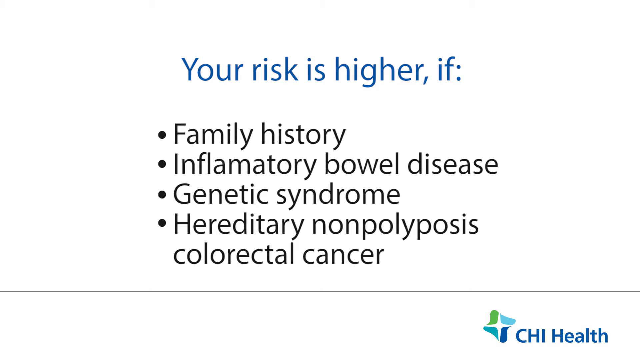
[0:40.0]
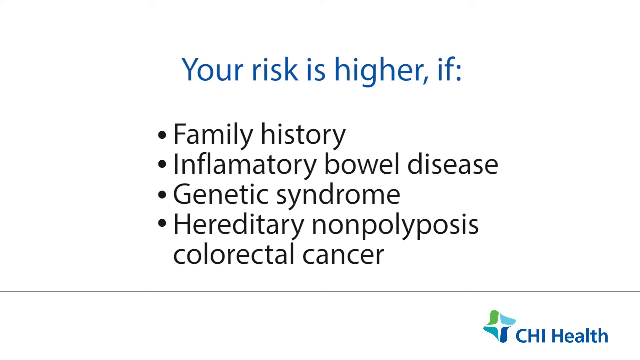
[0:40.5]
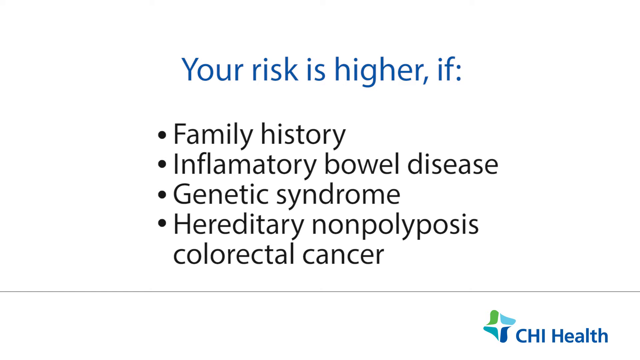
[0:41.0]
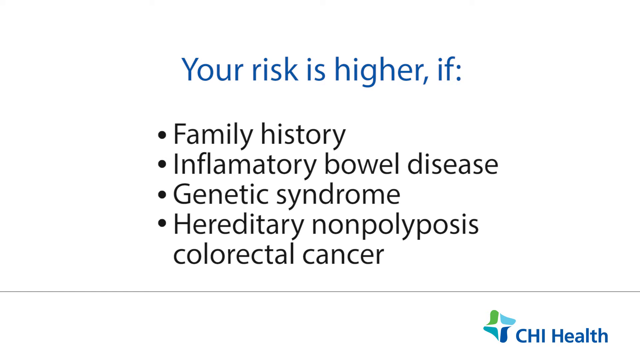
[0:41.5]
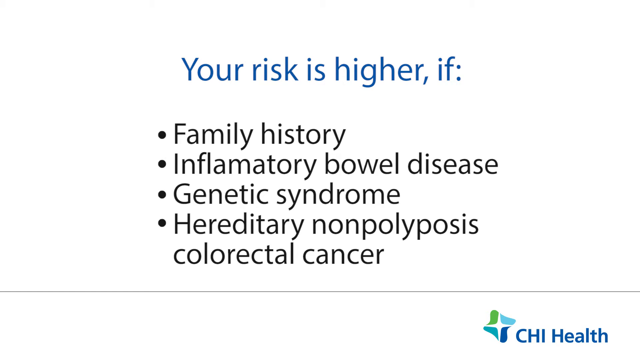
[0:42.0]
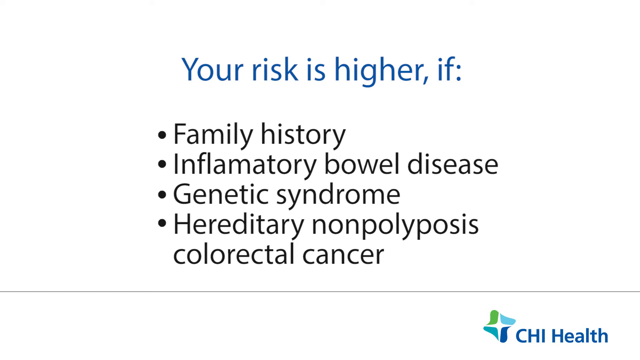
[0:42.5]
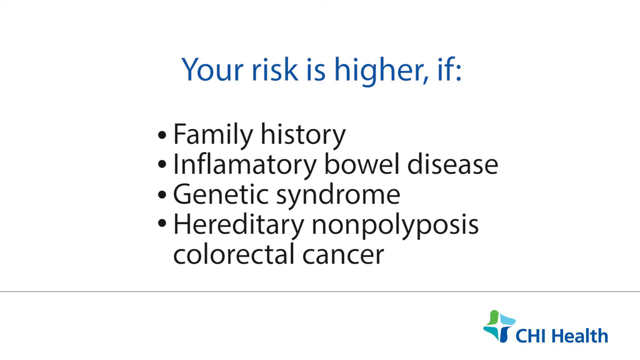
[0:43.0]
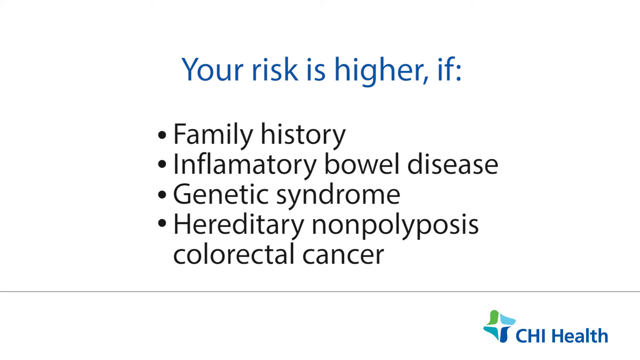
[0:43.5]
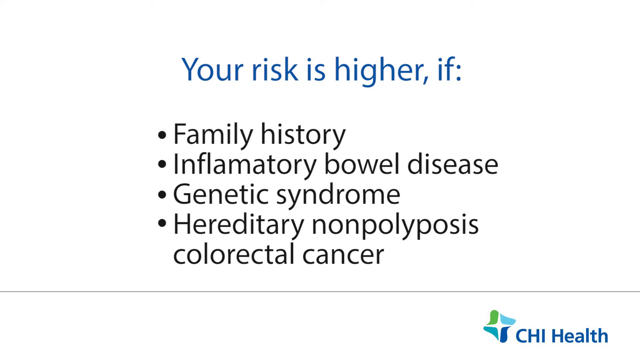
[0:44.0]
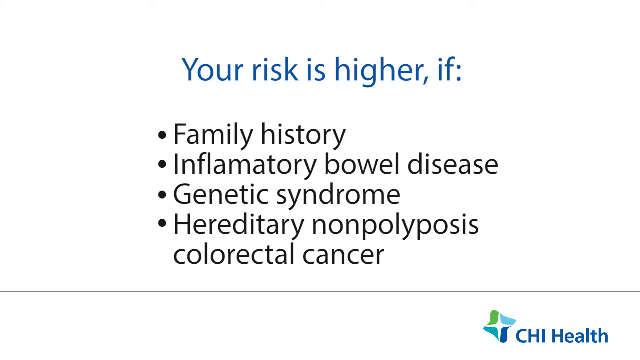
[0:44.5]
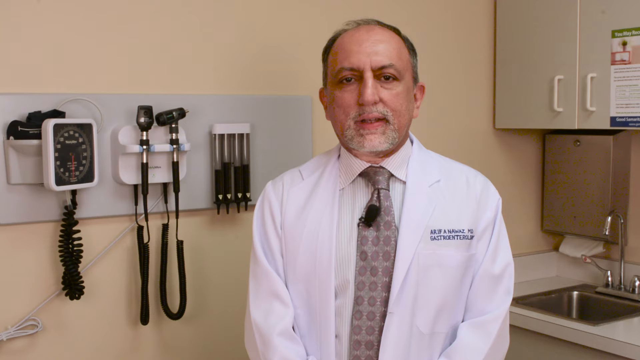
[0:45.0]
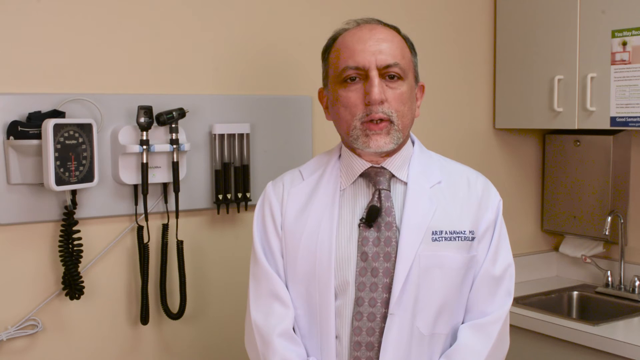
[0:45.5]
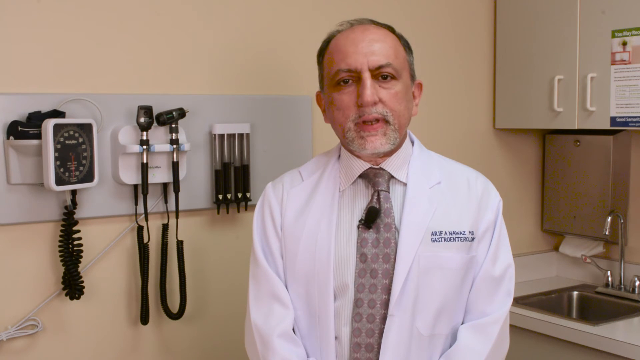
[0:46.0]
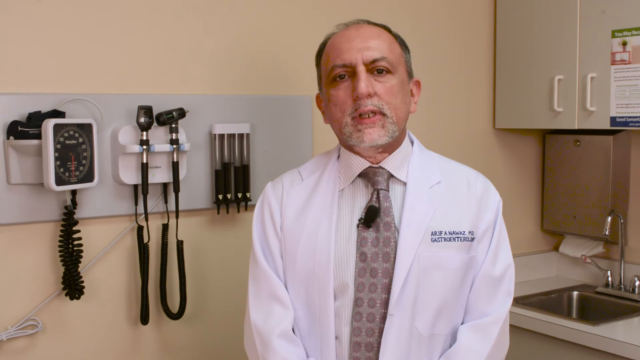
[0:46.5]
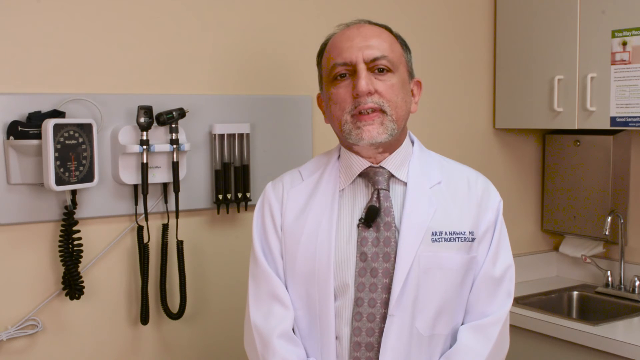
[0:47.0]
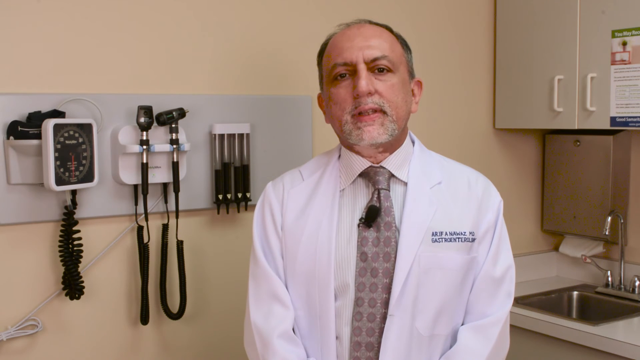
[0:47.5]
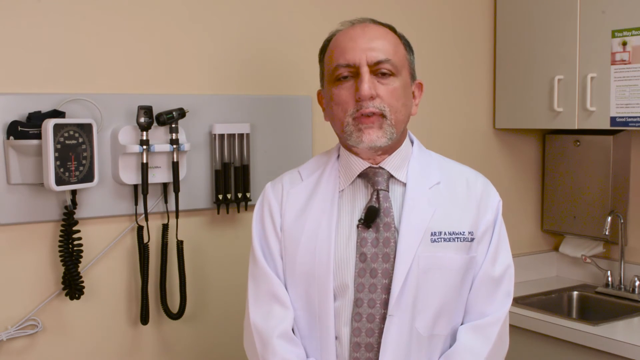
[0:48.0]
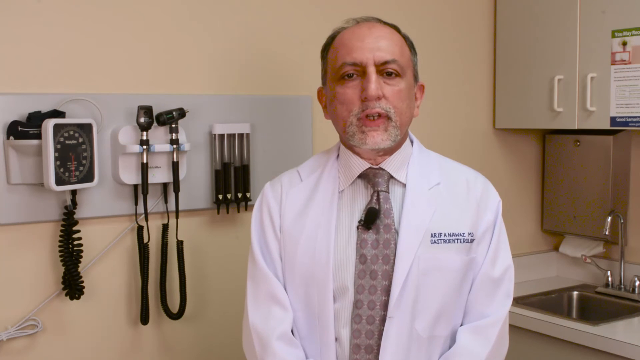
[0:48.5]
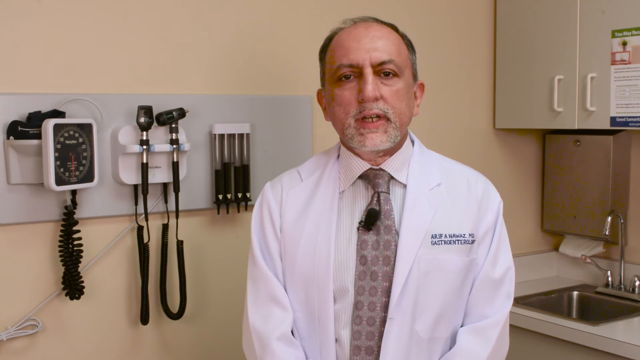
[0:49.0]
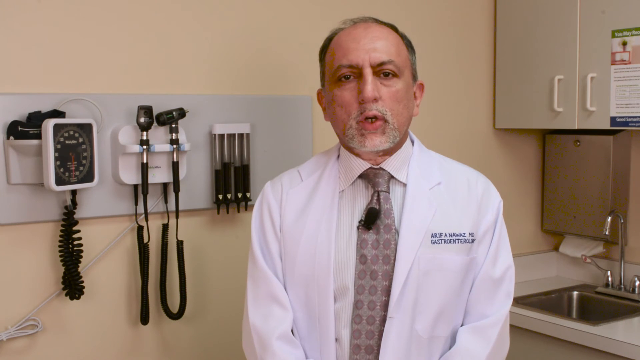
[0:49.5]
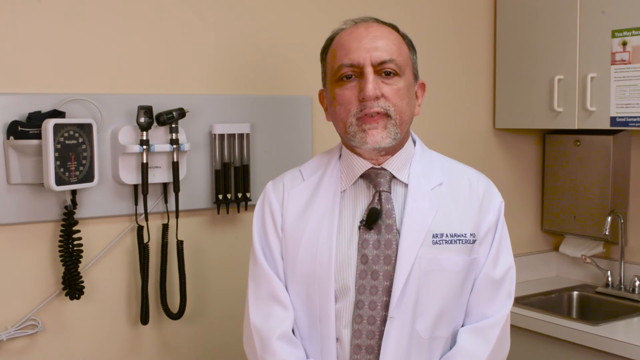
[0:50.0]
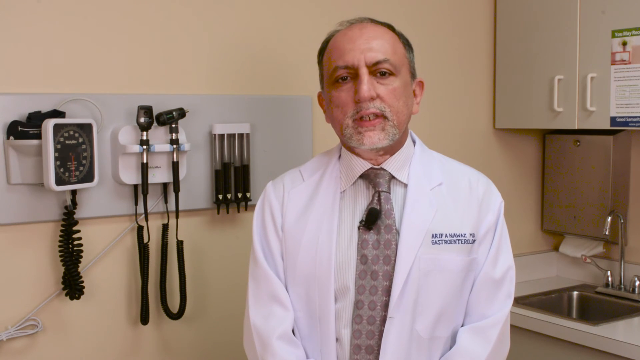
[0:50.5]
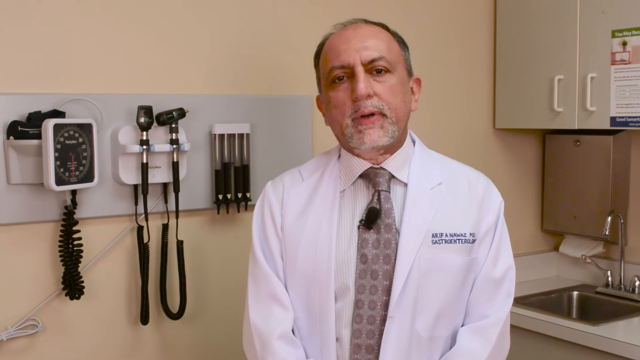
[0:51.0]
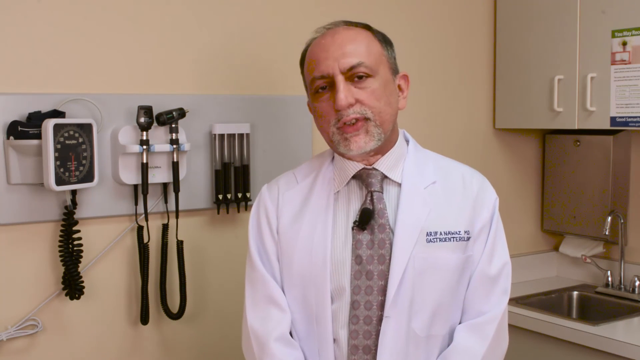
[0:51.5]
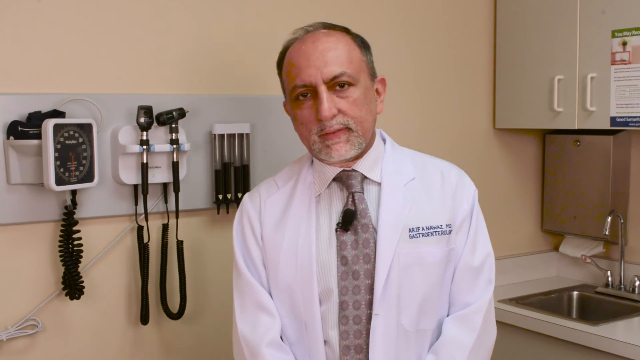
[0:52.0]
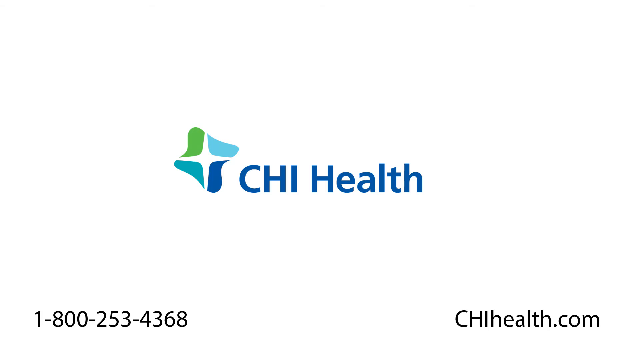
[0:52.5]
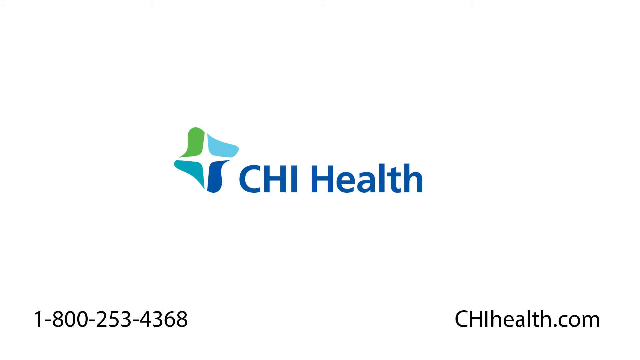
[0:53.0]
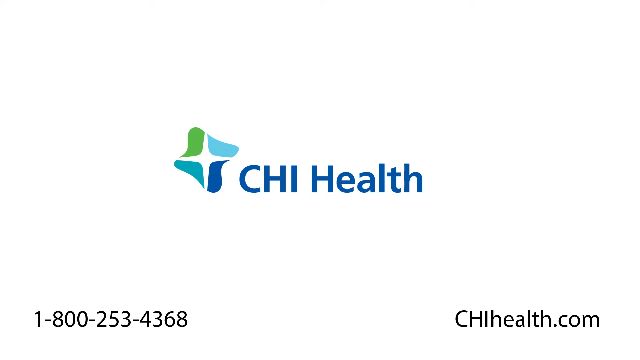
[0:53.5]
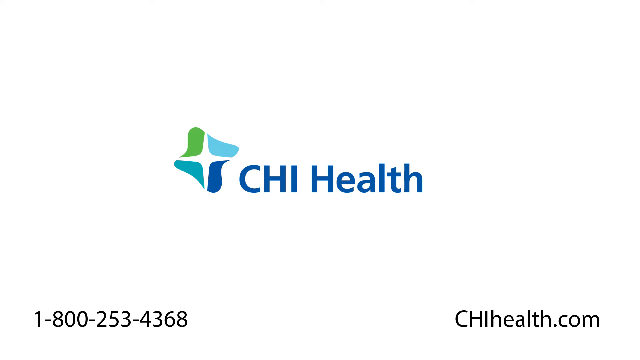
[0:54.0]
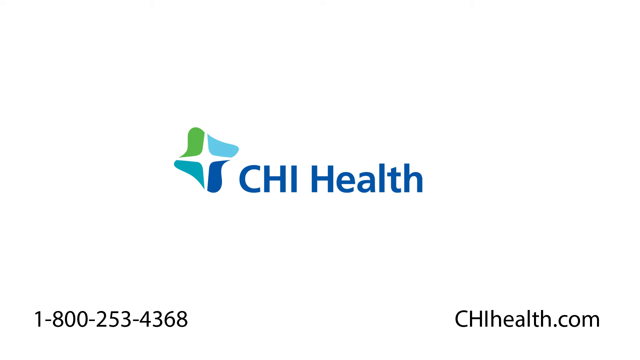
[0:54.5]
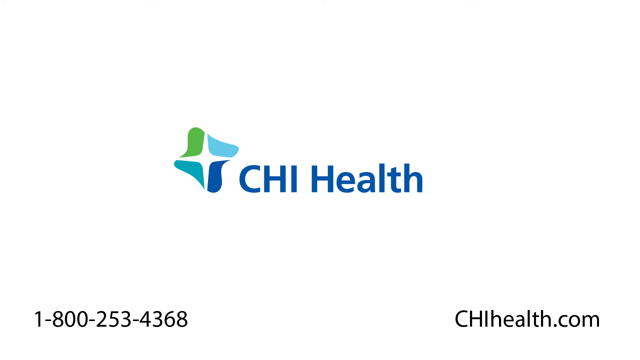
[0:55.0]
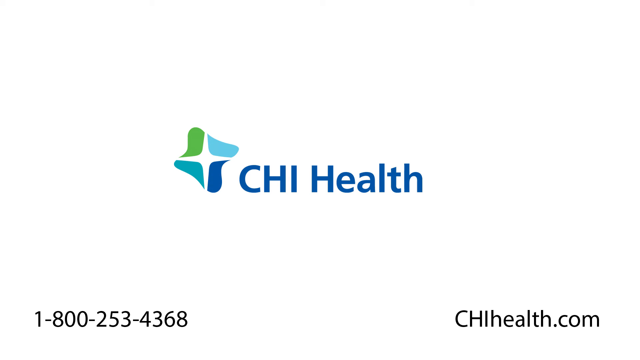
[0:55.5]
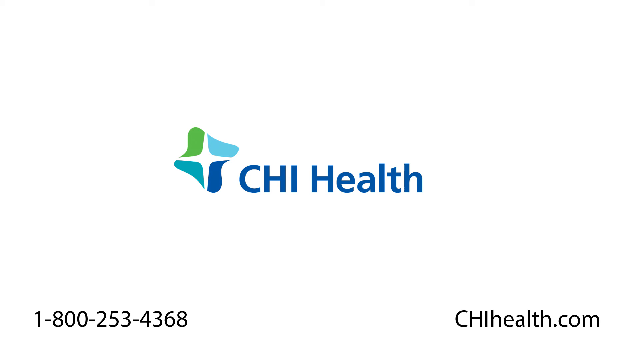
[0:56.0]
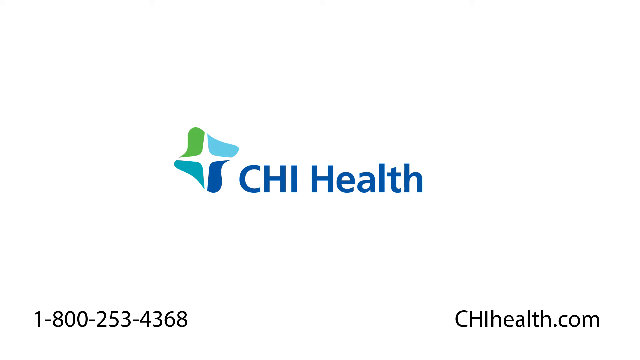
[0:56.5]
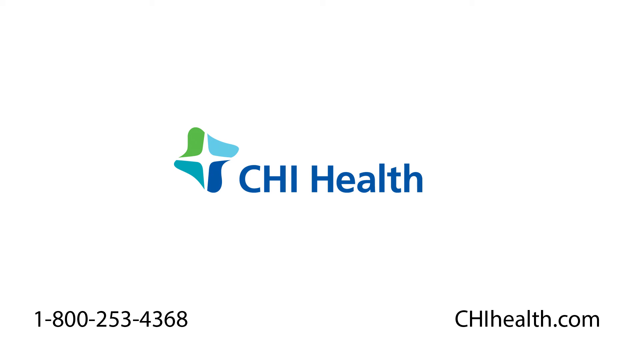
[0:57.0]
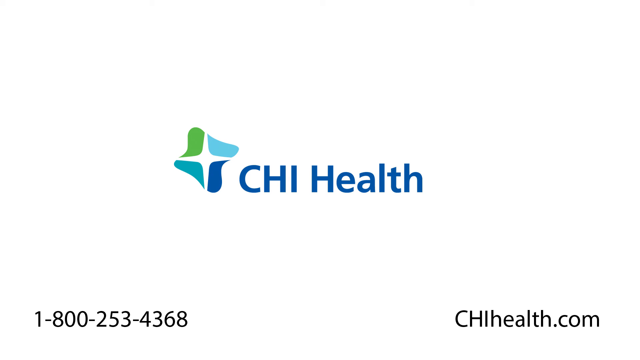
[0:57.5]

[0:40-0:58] The screen listing the things that make the risk higher is still shown. The video then cuts back to the doctor, who continues to talk directly to the camera and then tilts slightly to the right. Next comes a white screen with the CHI Health logo in the centre. The logo seems to be made up of four shapes, one green, one dark blue, one light blue and one teal, arranged around the shape of a white four-pointed star. In the bottom left-hand side of the screen is the phone number in black lettering, and in the bottom right-hand side is the website, chihealth.com.